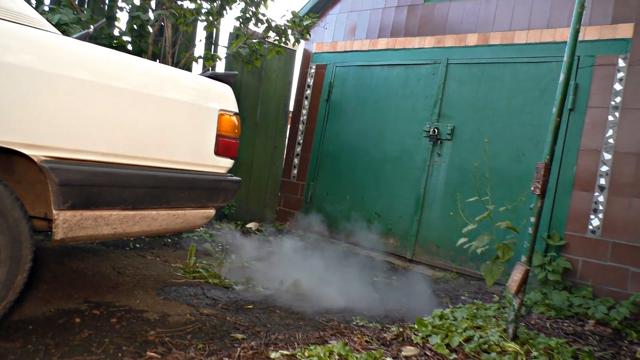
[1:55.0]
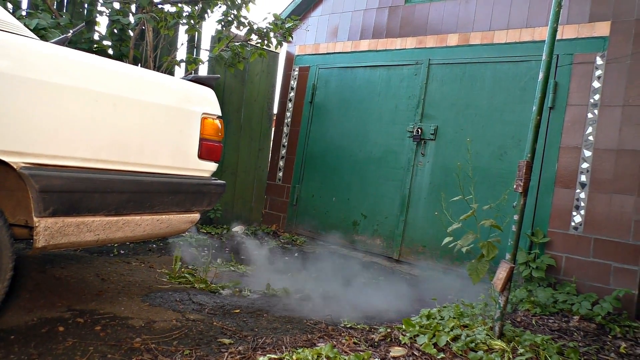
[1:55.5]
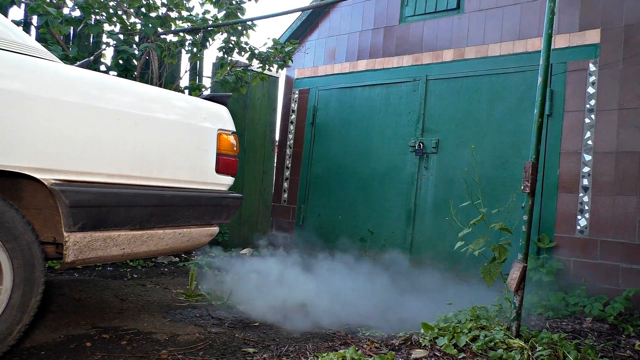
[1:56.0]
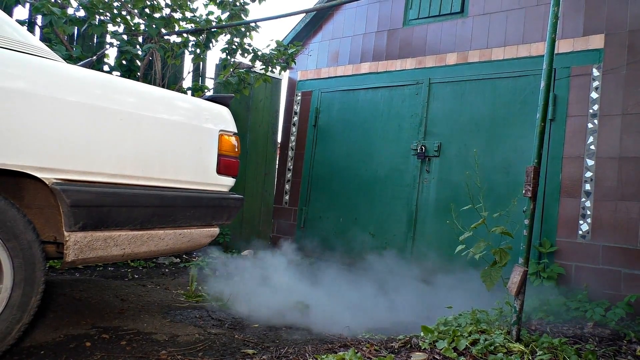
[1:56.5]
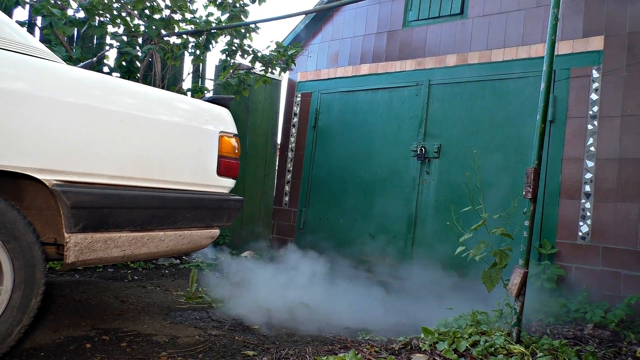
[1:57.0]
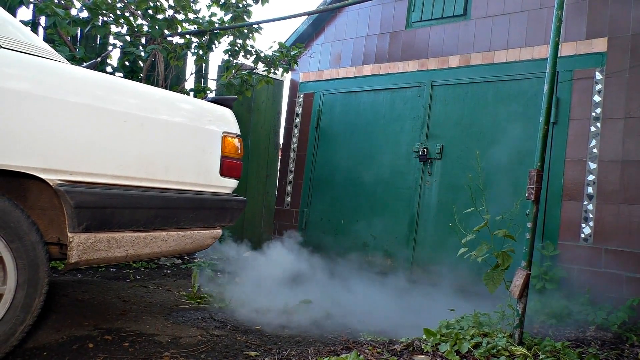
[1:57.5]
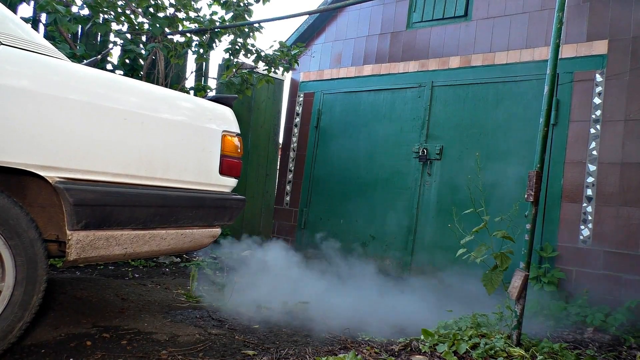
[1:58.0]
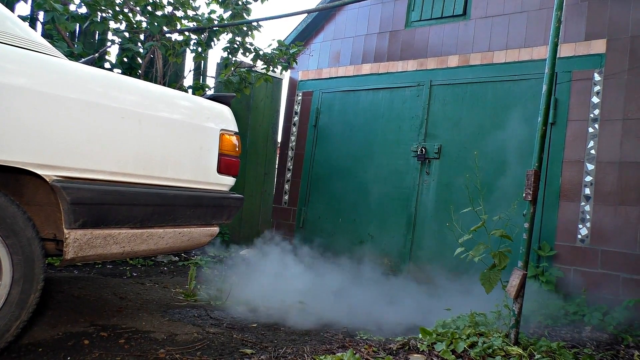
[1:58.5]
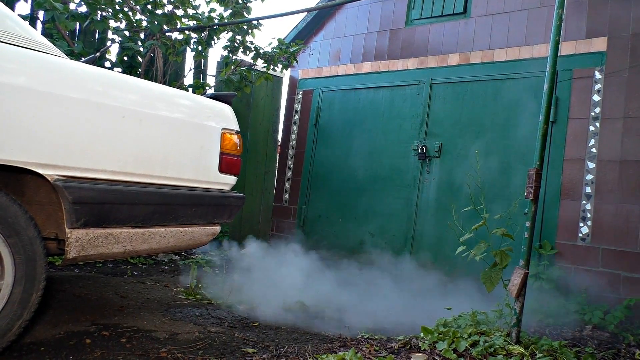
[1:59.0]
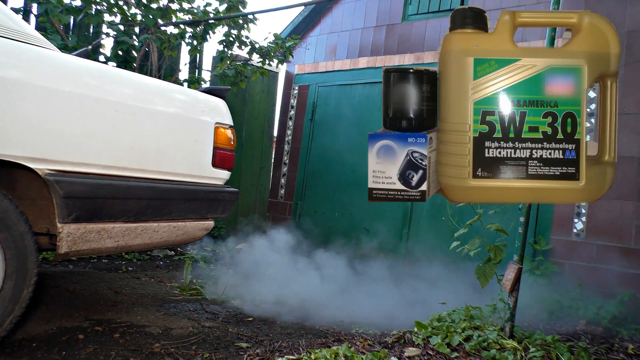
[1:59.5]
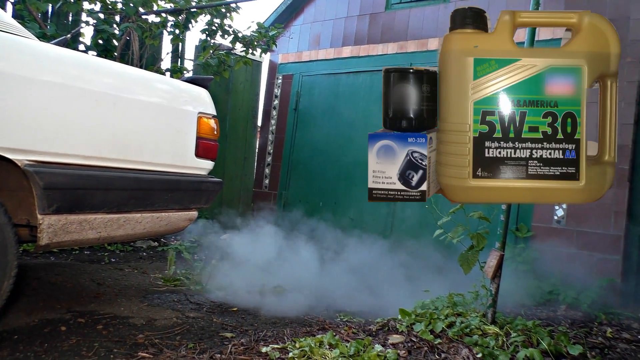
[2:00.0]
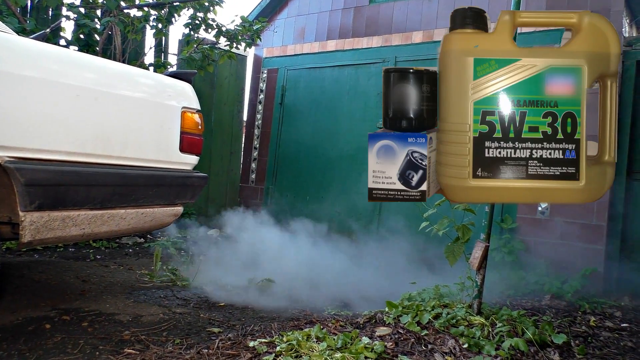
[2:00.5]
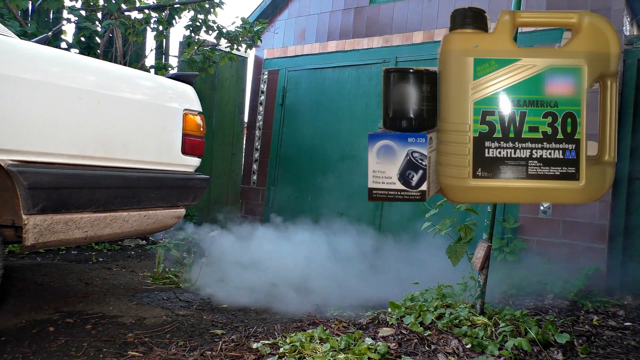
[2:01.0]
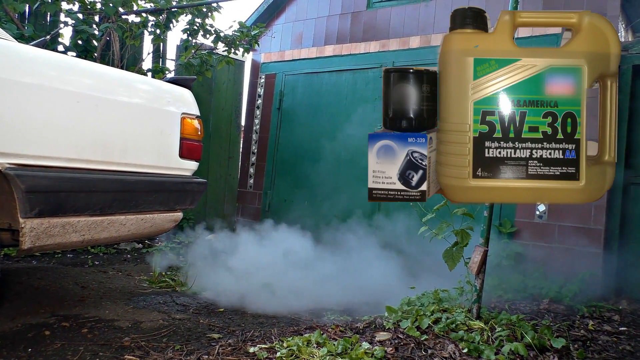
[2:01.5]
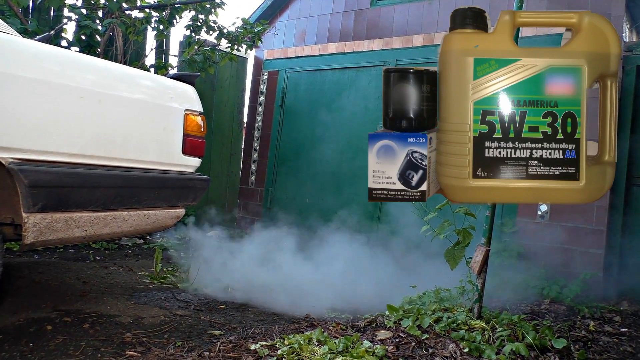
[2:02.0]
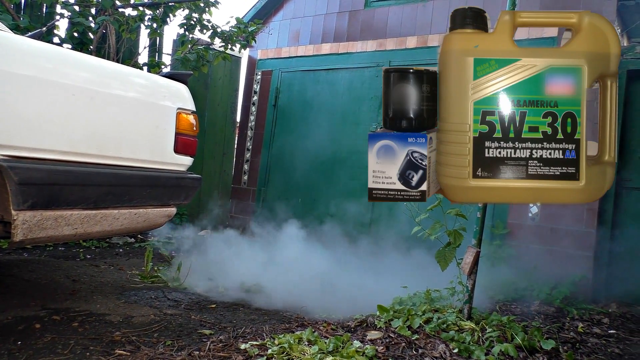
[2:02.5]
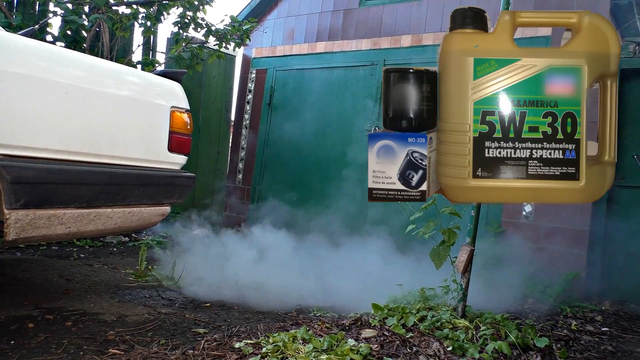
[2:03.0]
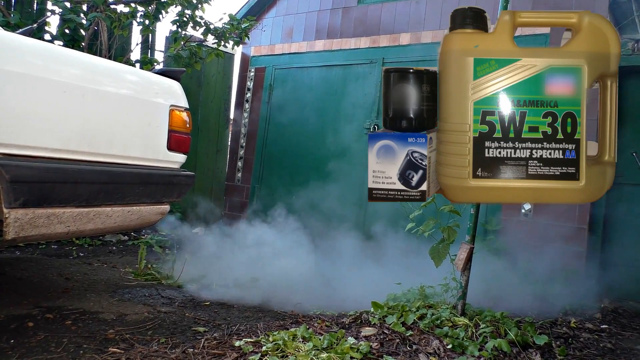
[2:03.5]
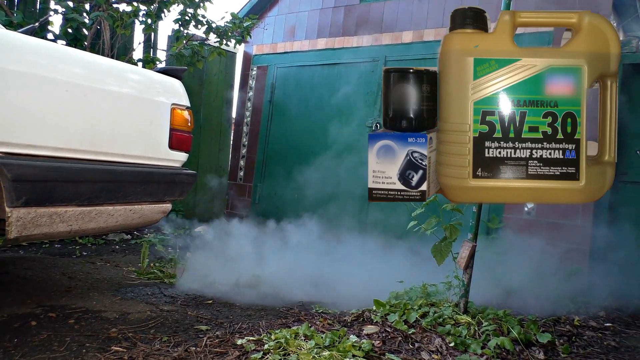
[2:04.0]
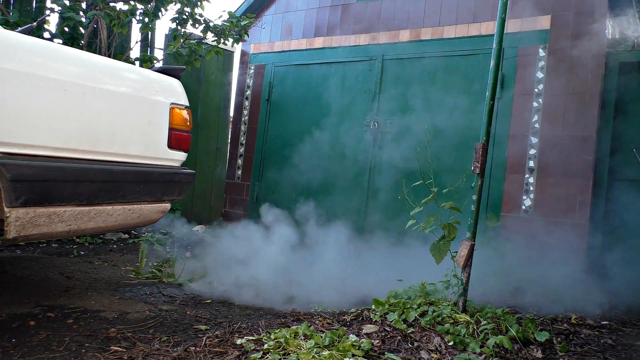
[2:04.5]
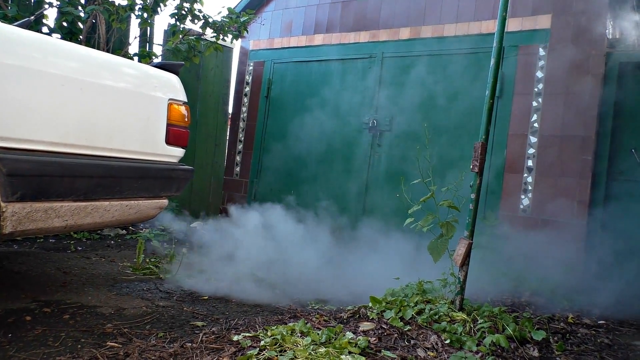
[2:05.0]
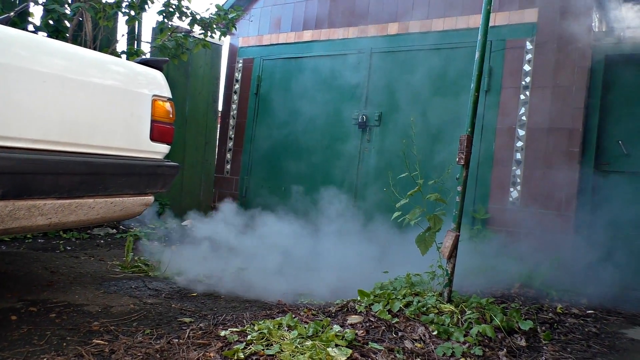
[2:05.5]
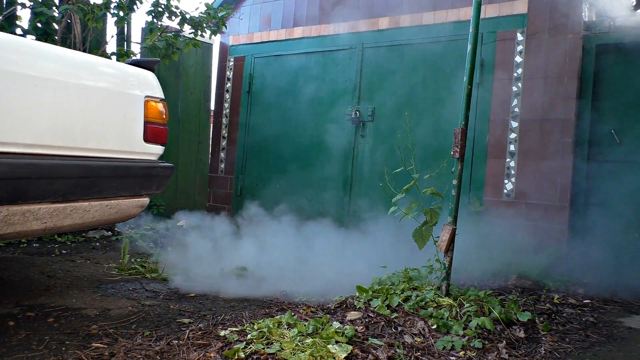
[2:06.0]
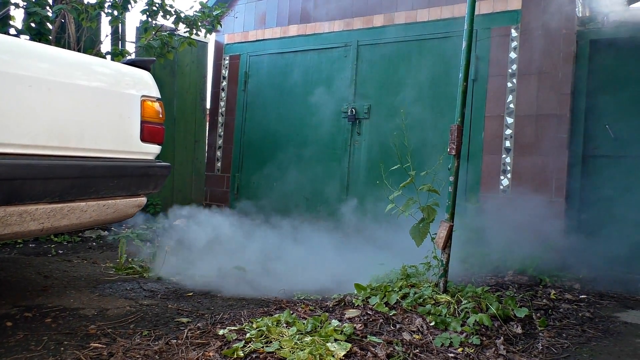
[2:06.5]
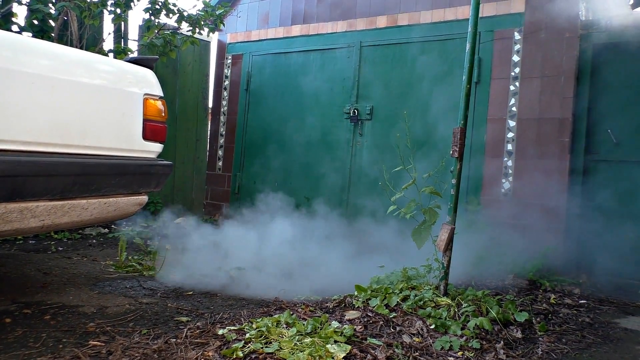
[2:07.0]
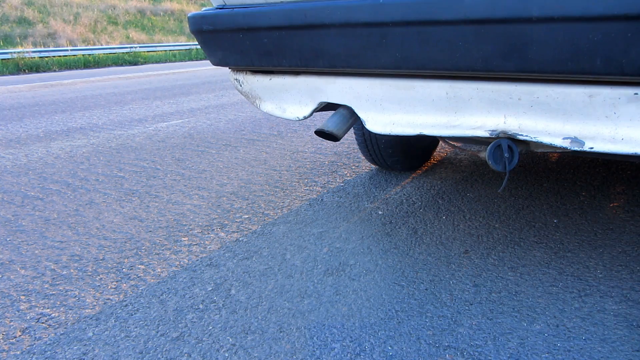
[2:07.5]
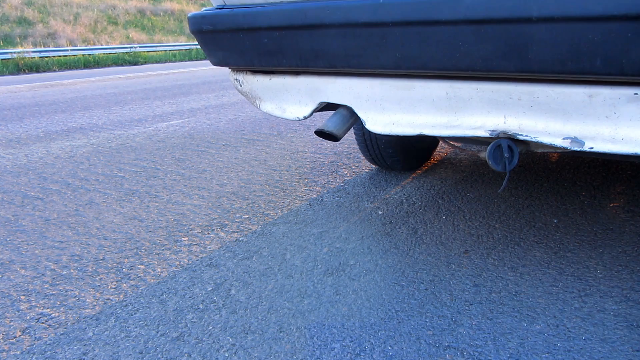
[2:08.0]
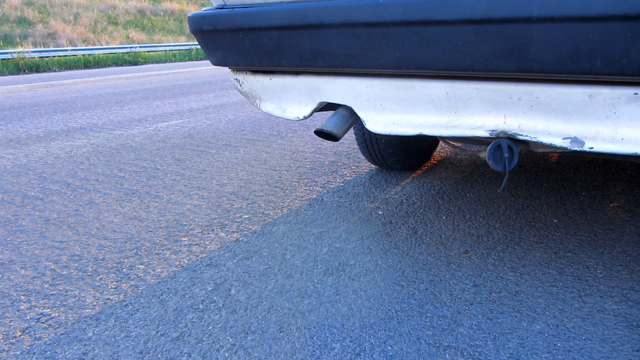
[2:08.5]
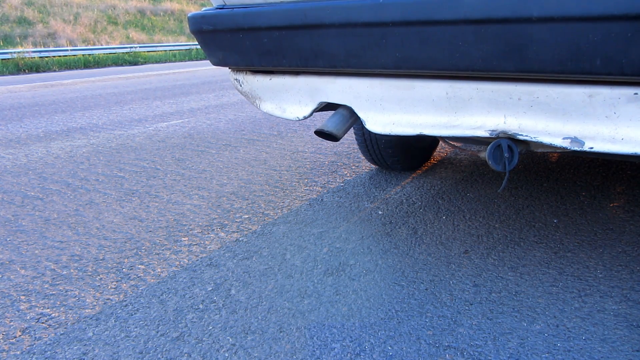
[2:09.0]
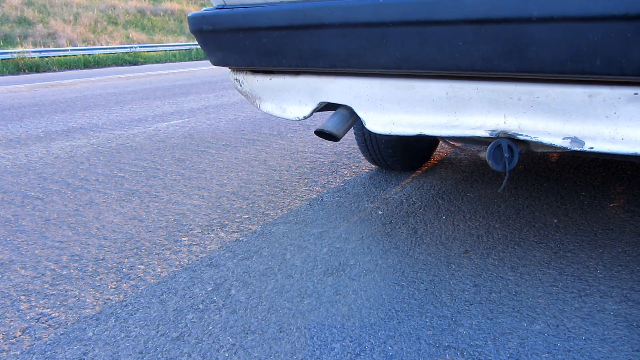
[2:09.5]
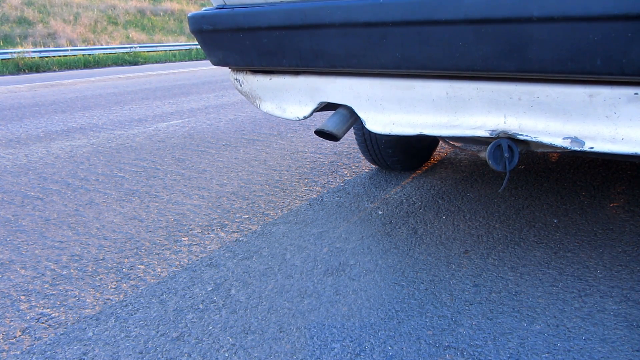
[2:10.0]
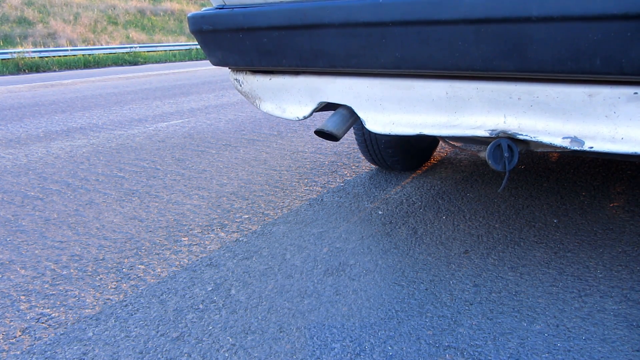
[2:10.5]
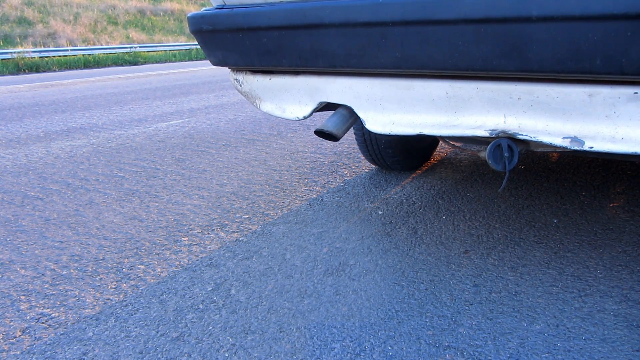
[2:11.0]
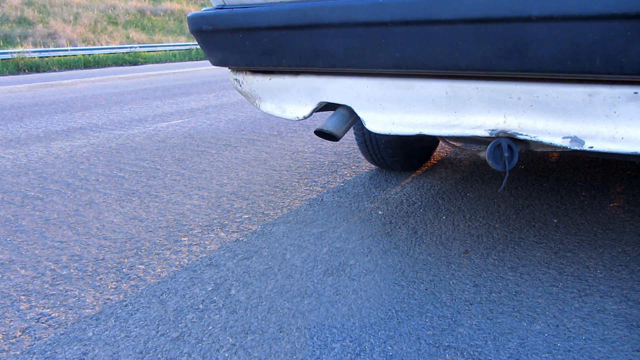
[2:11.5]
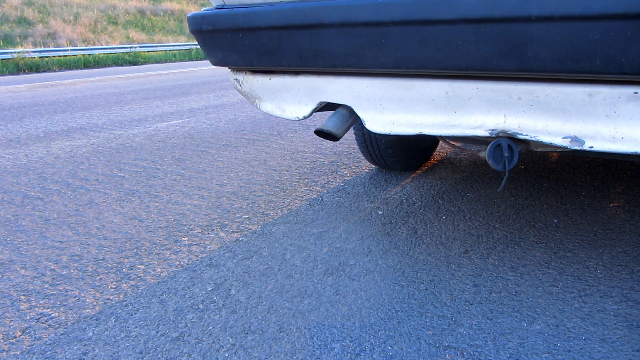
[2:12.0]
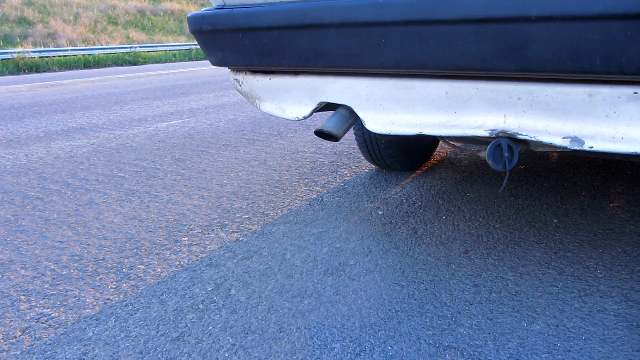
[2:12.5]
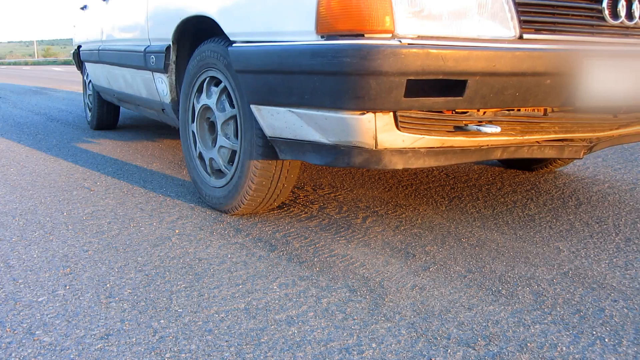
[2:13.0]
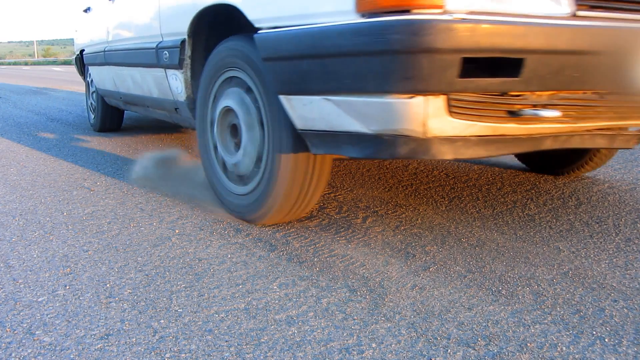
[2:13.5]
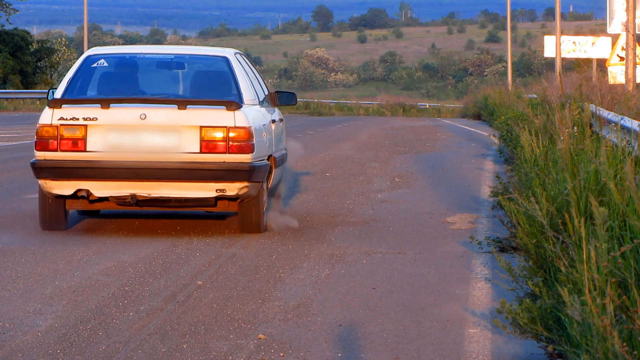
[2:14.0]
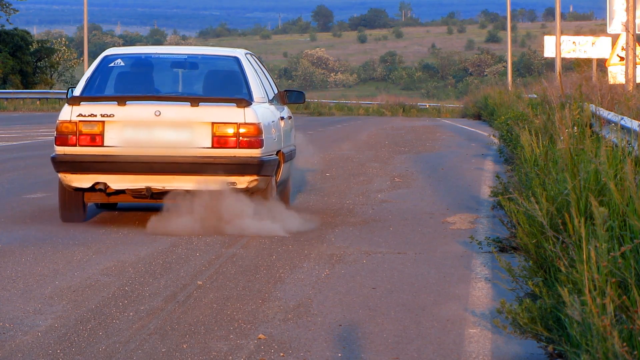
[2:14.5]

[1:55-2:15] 5W-30 oil is shown in the upper right-hand corner. The back of the car is shown with the tailpipe spewing white gas; no subtitles appear in this part. A suggested video appears. The white car starts to go down a road in the sunshine with lots of smoke coming off it; the road is a little curvy, and the car is not shown going very far. Toward the end, an information button pops up at the top of the video.